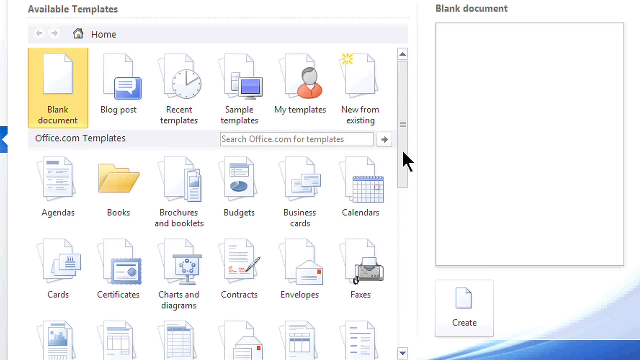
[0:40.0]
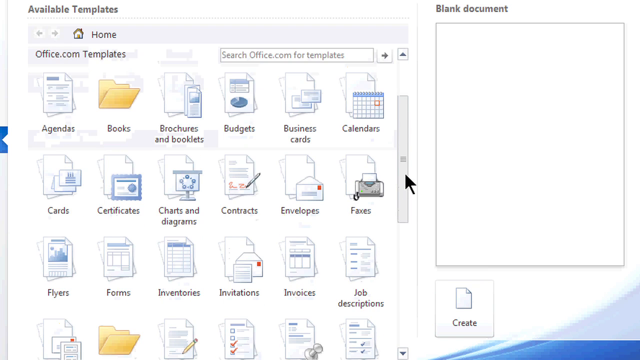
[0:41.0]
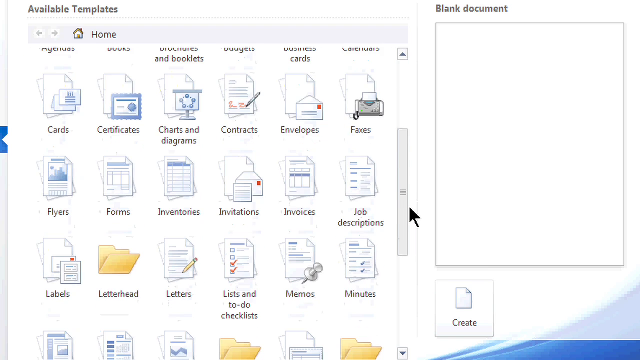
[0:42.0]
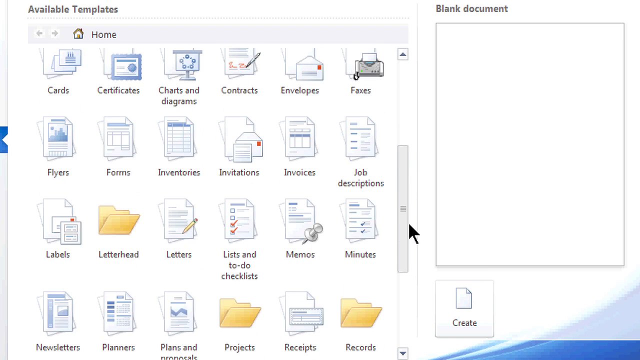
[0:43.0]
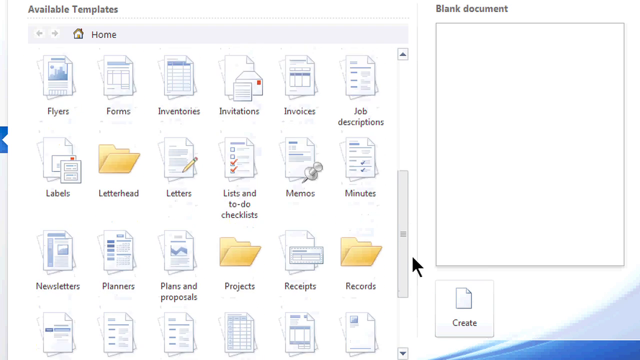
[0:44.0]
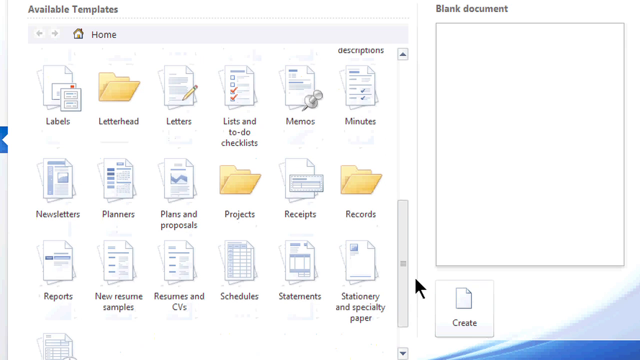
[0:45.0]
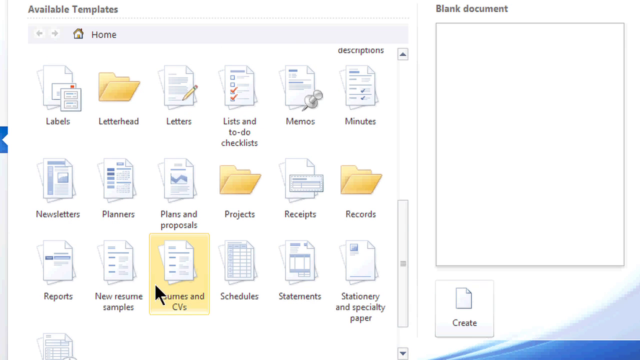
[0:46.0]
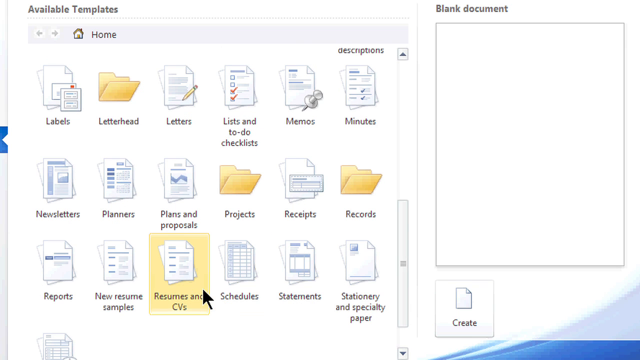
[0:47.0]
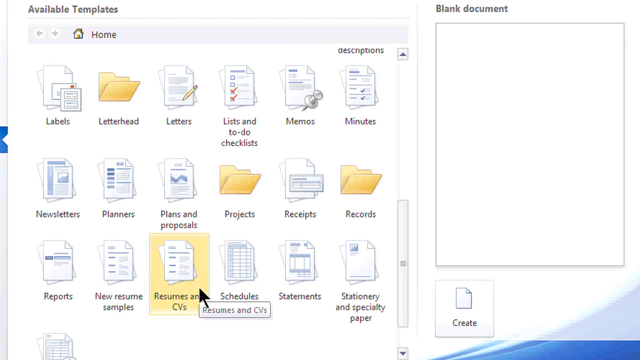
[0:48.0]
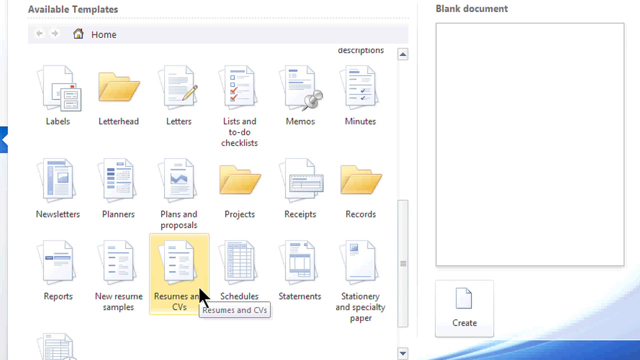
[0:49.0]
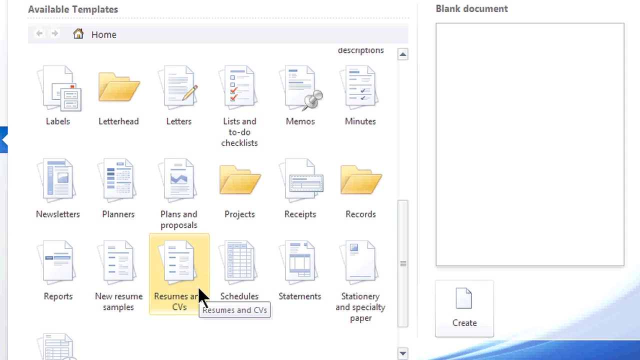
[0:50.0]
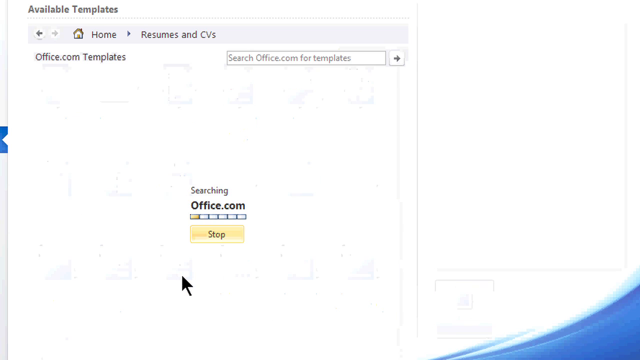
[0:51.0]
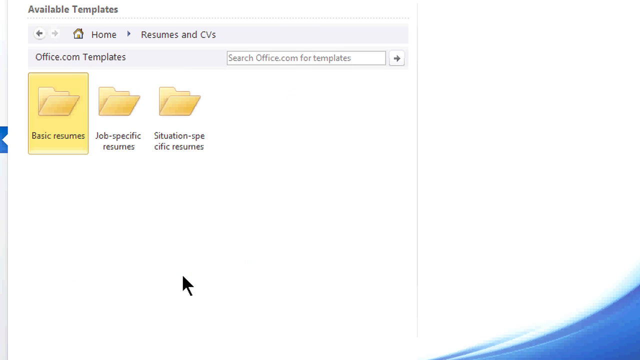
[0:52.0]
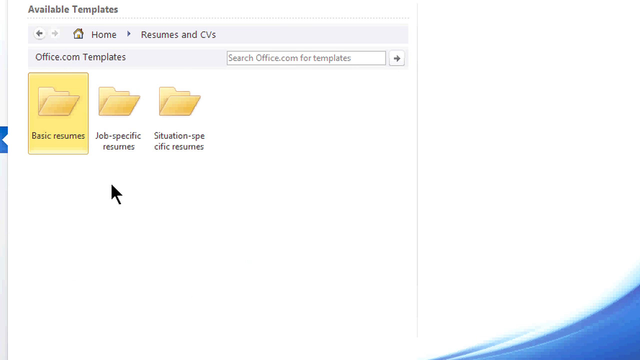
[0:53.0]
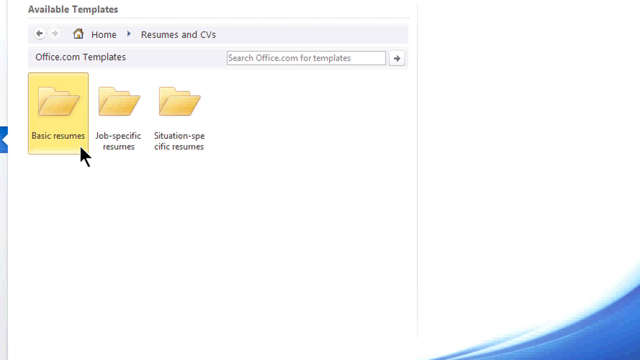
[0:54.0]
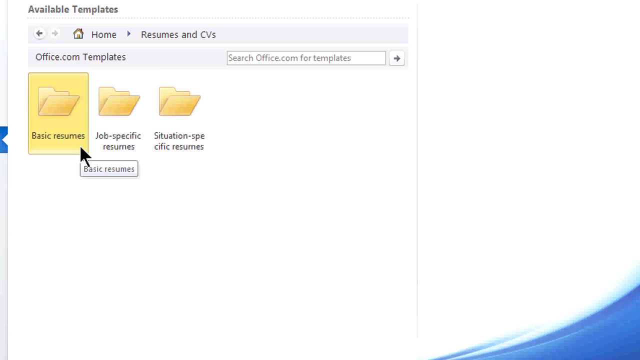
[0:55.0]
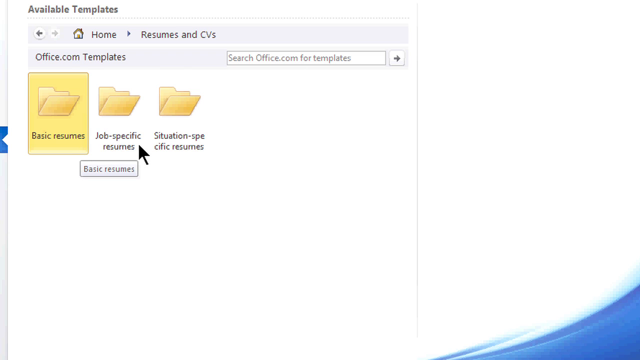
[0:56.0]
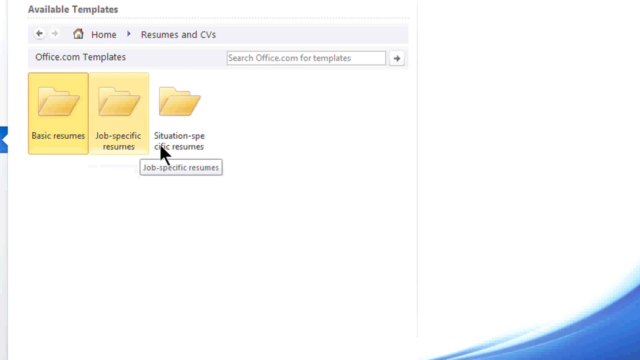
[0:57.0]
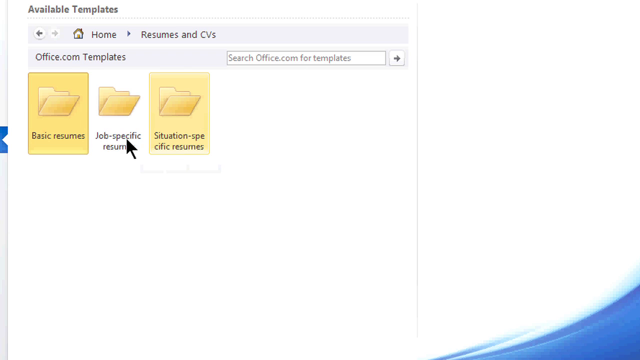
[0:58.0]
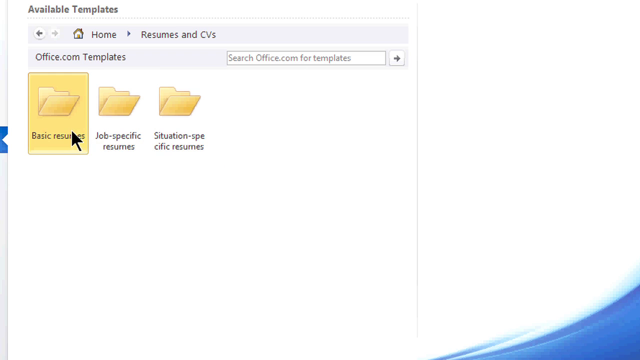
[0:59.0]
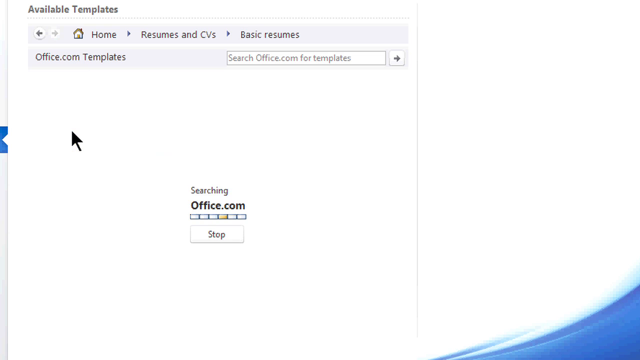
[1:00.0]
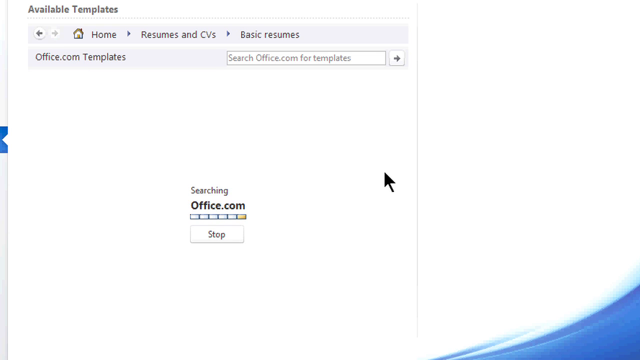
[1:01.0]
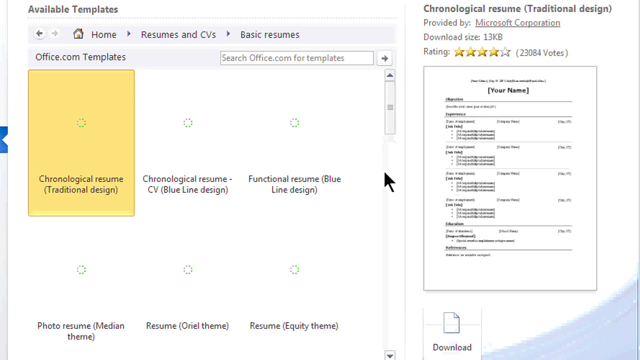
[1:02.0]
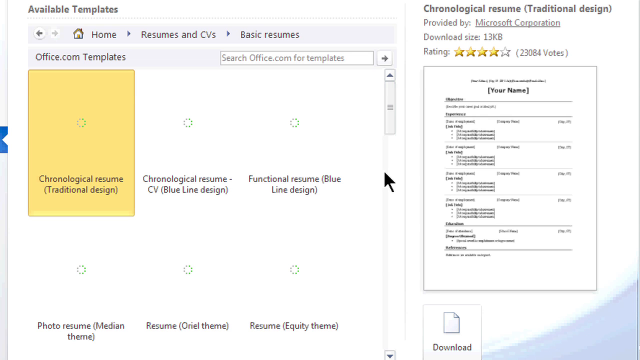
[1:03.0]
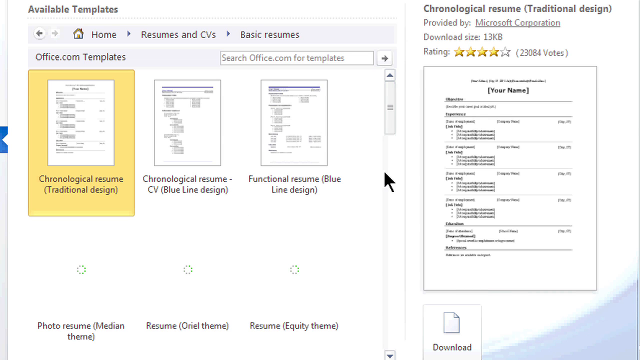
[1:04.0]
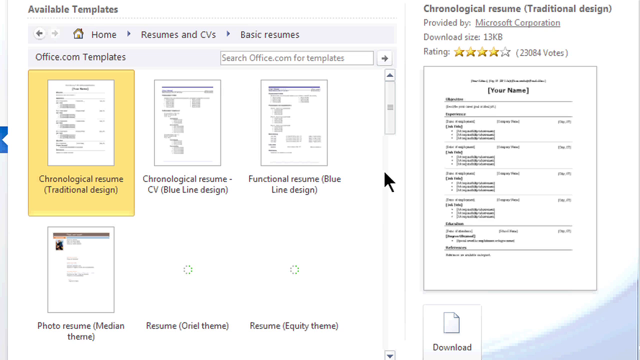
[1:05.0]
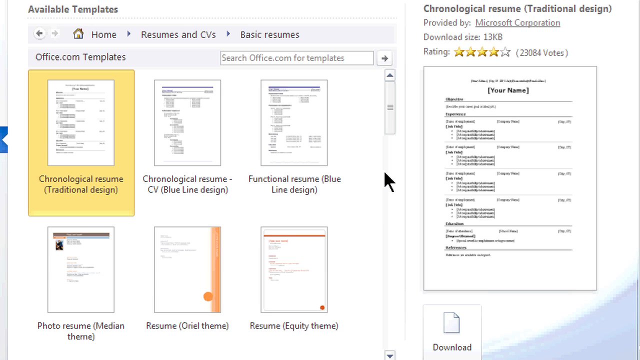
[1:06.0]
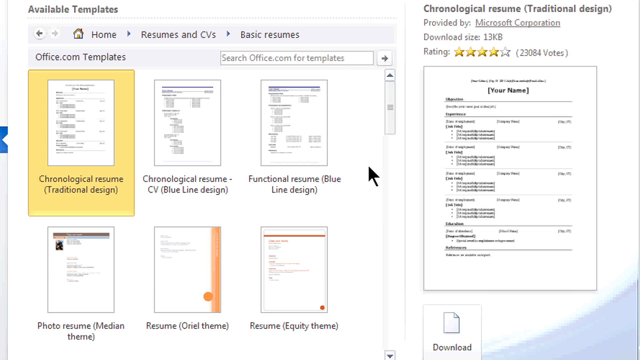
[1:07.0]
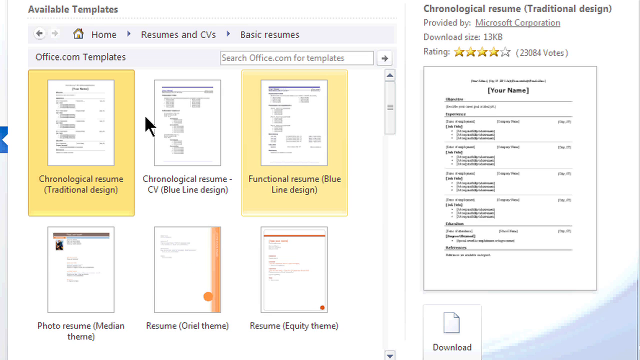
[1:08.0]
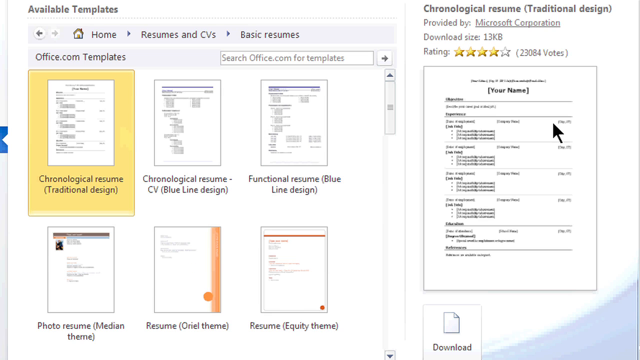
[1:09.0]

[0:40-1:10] Only the computer screen is shown; her face does not appear. She shows pages on the computer for editing pictures and photos, and where to go for different tasks. Several pages are open, apparently four: one is for a job application, one is for editing, and another is for office.com.